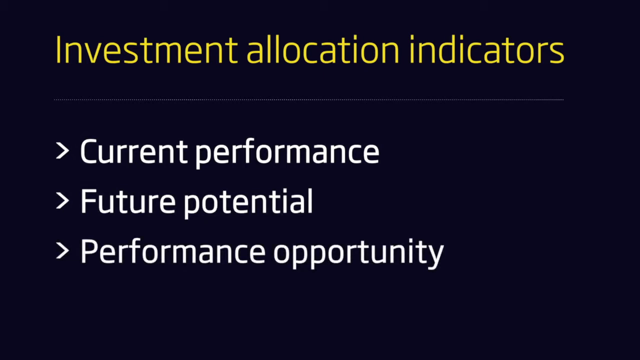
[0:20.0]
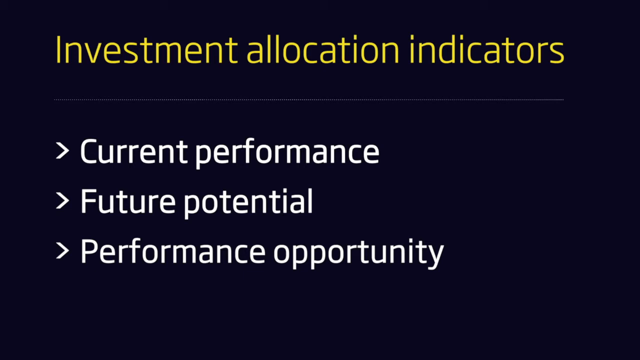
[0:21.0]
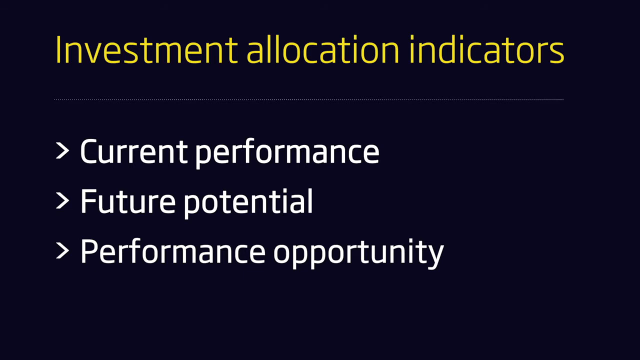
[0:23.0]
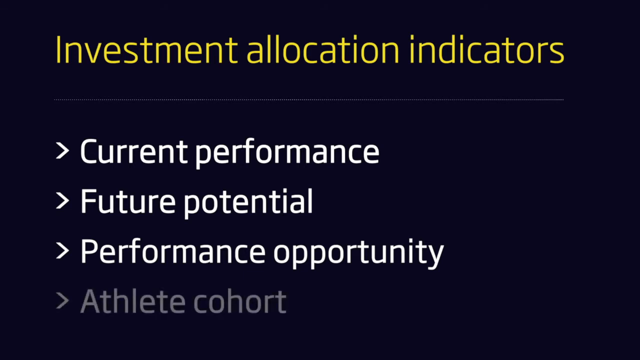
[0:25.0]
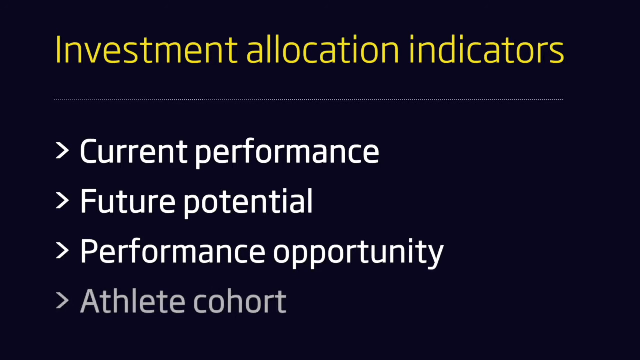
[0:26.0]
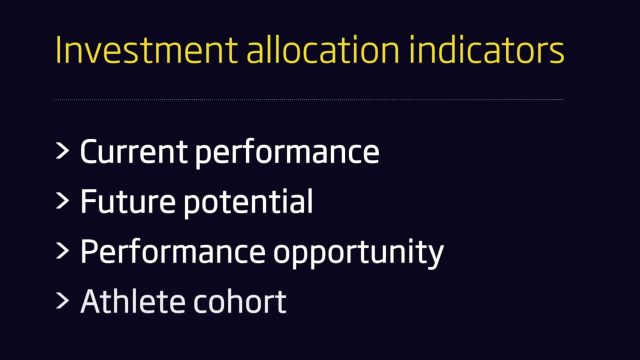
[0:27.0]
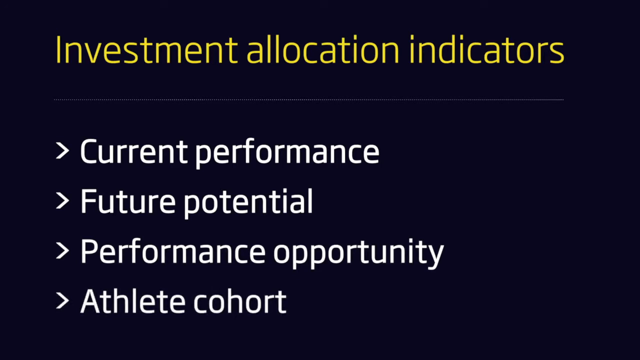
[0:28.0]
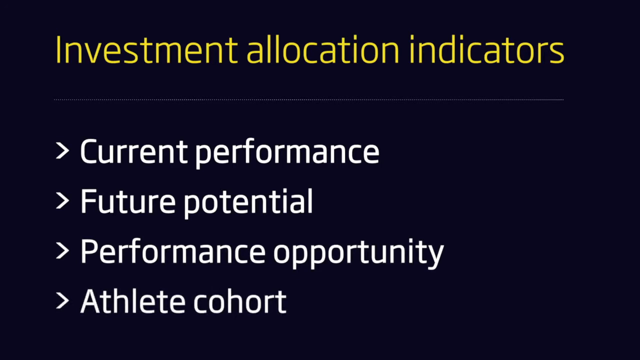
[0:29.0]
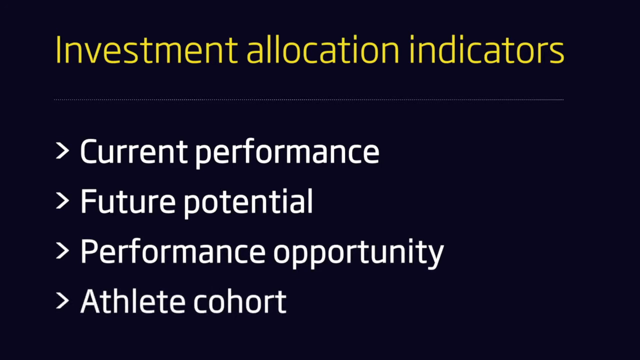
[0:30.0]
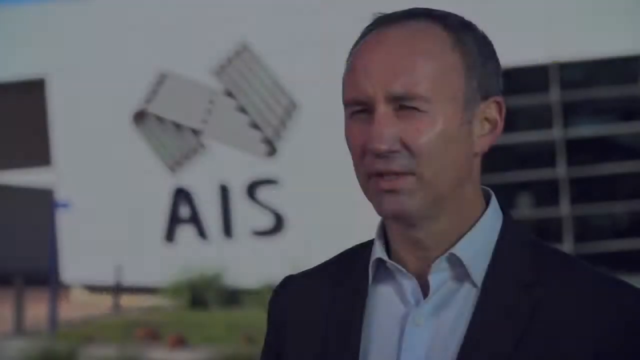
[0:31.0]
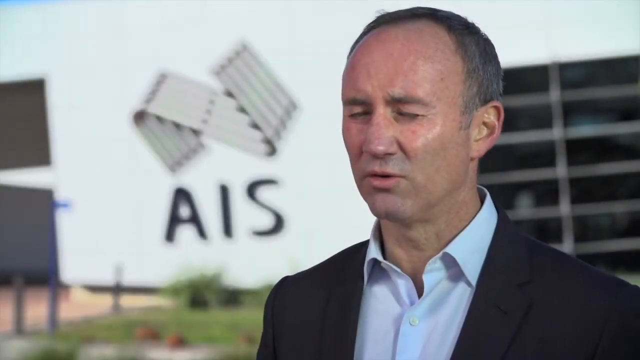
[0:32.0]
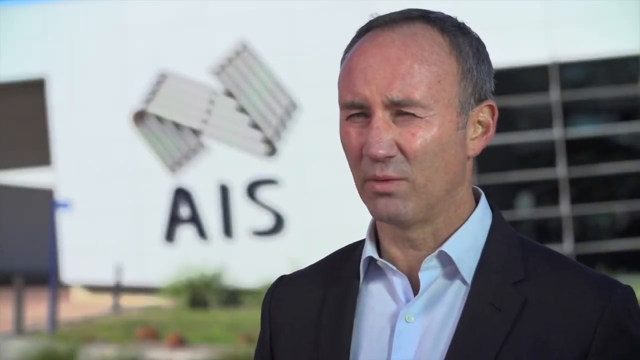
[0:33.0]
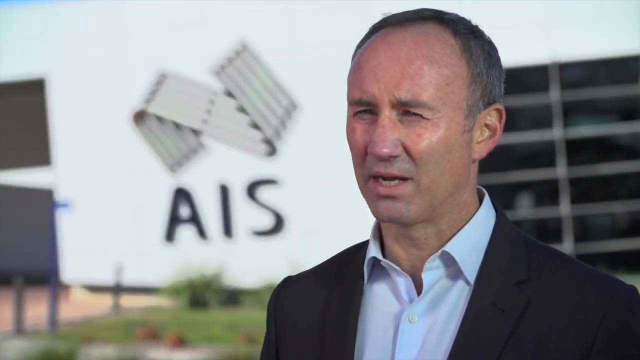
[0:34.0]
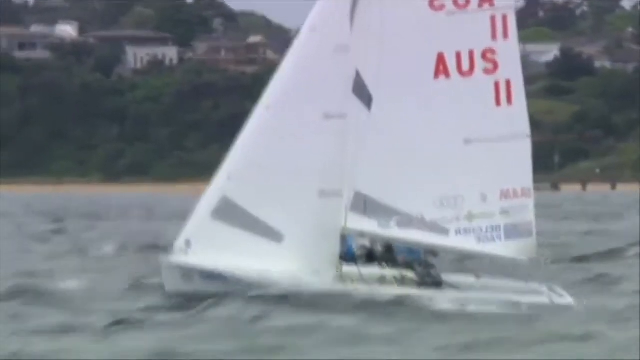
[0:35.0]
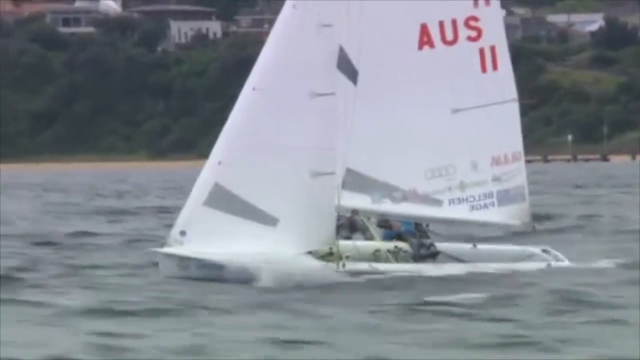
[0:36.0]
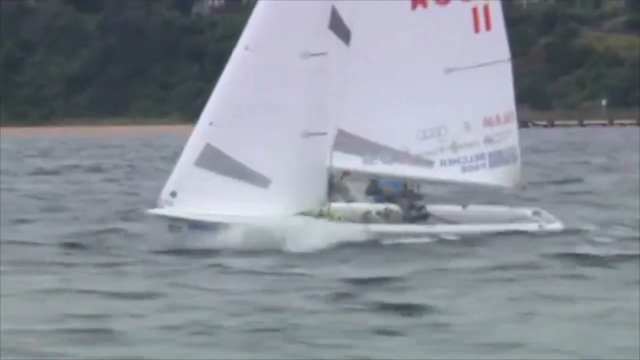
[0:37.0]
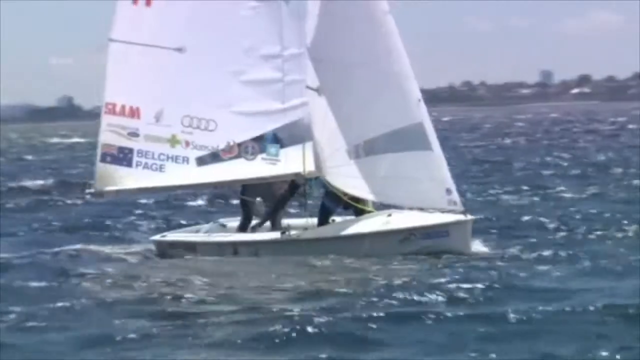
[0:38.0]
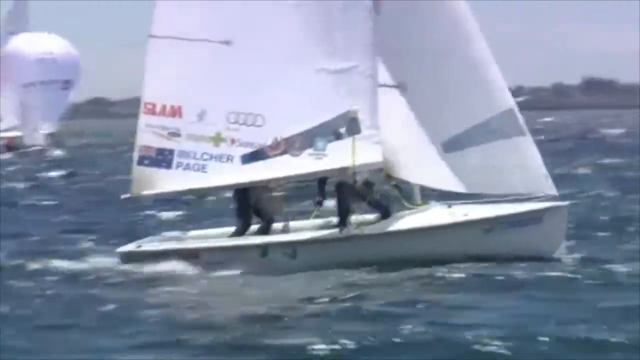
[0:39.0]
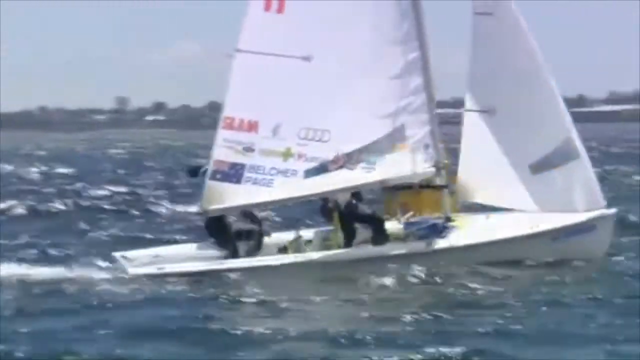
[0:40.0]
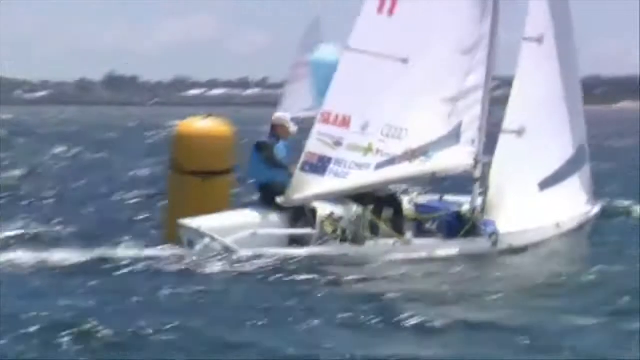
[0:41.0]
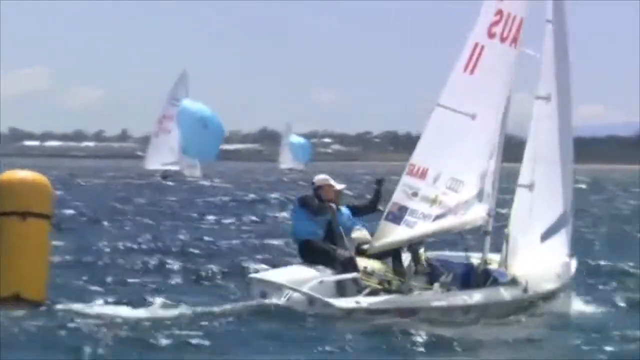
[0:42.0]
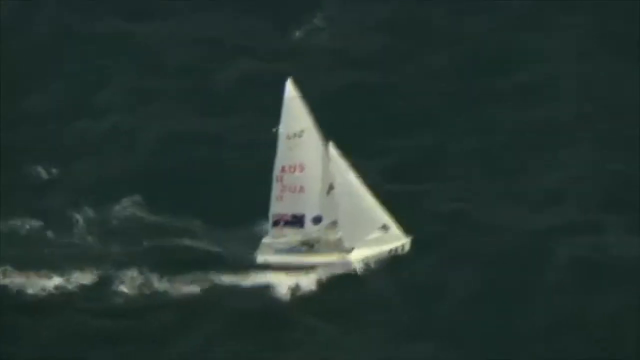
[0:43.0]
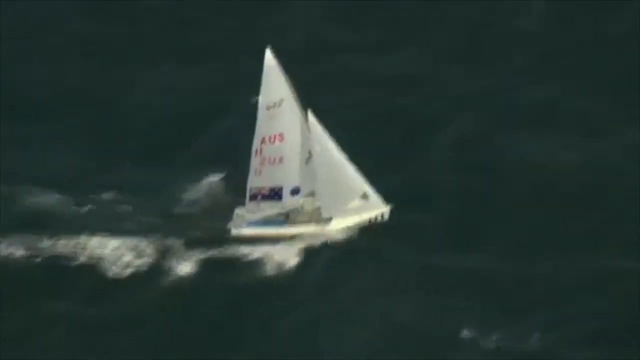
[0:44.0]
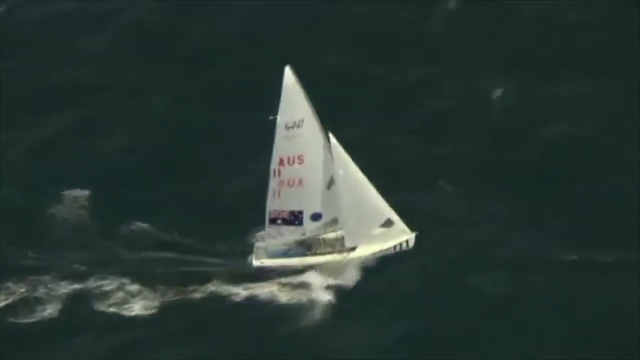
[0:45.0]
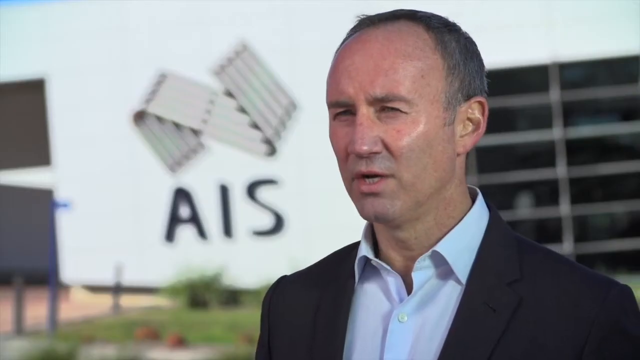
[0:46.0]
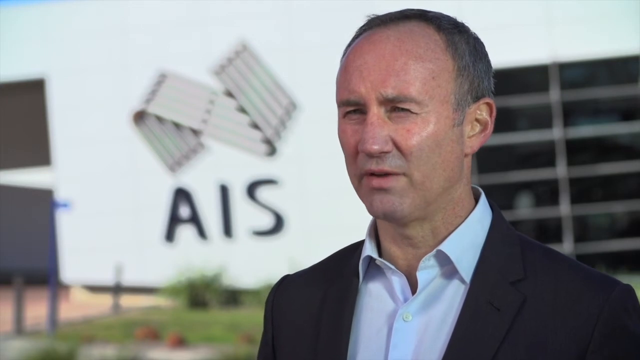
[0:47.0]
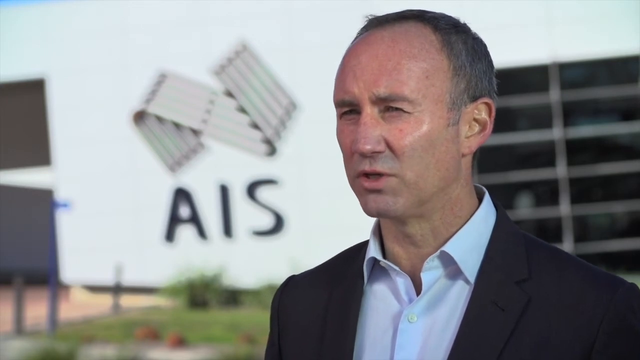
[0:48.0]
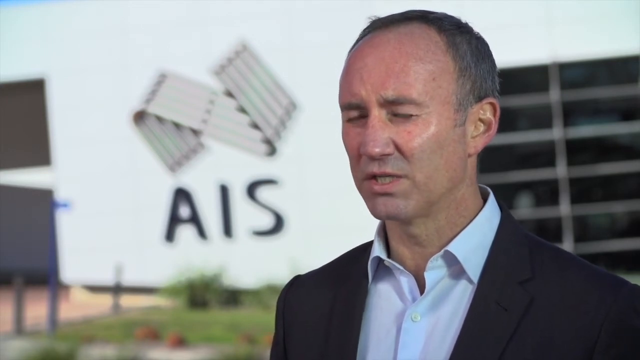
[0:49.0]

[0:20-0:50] The gentleman, the director, is speaking. Text then reads "investment allocation indicators overall," and underneath it is a section with "current performance," "future potential," and "performance opportunity." The scene shifts to small sailboats racing in Australia; one of the sailboats has a sail with "AUS" on it.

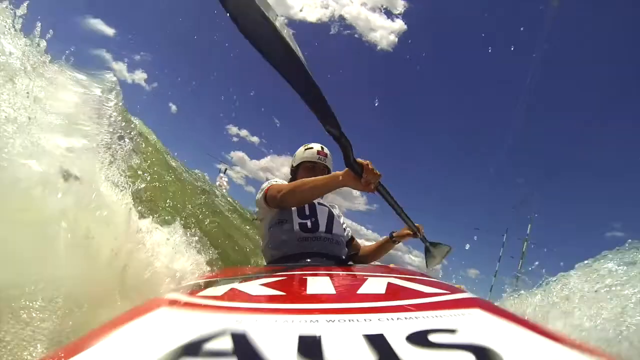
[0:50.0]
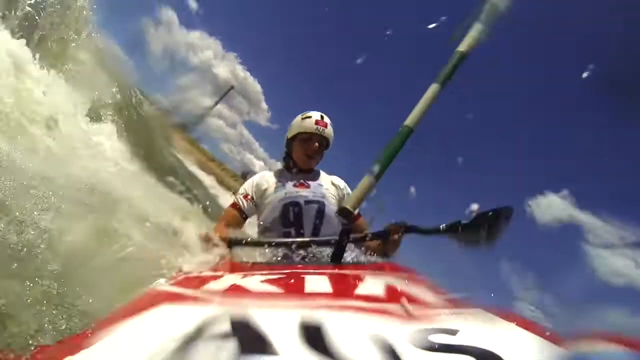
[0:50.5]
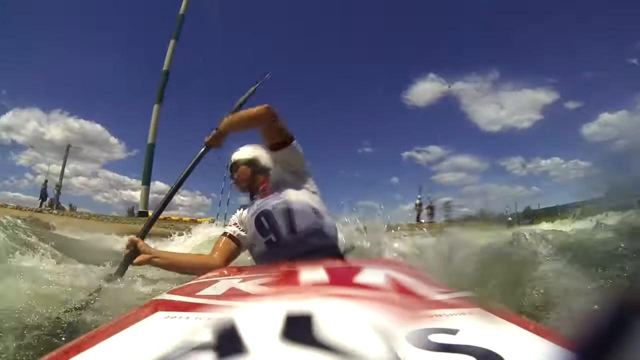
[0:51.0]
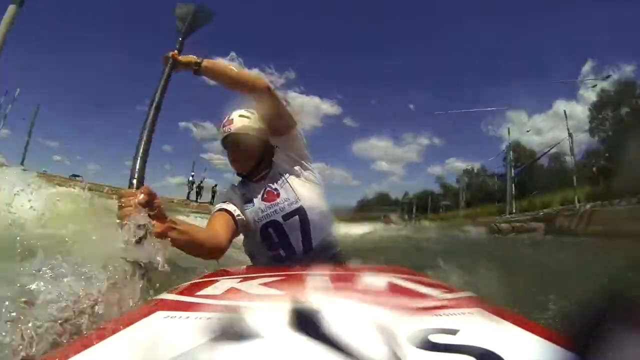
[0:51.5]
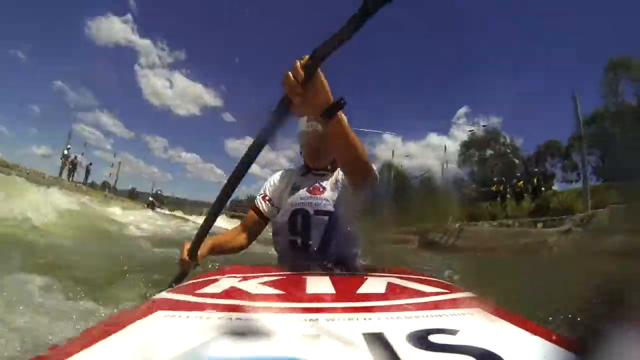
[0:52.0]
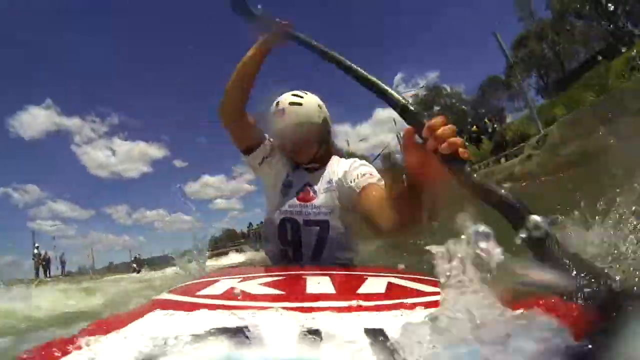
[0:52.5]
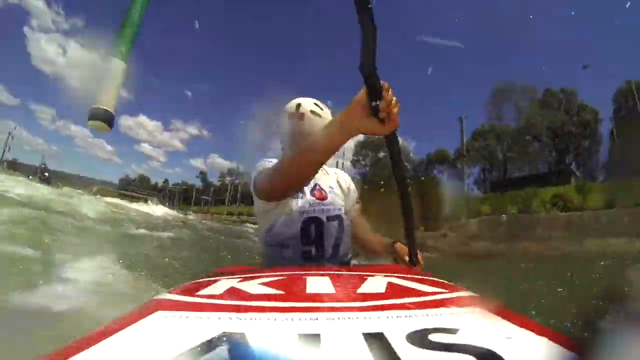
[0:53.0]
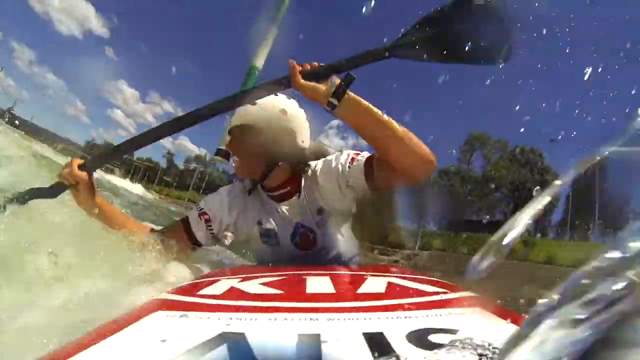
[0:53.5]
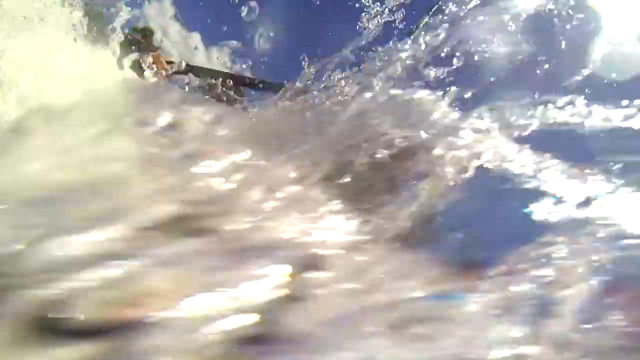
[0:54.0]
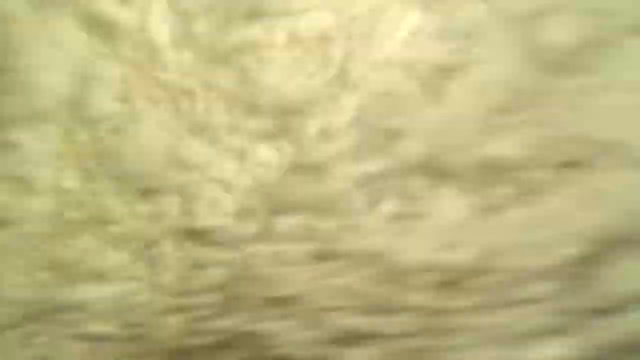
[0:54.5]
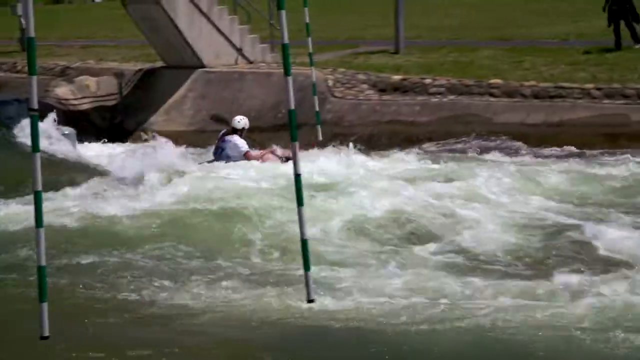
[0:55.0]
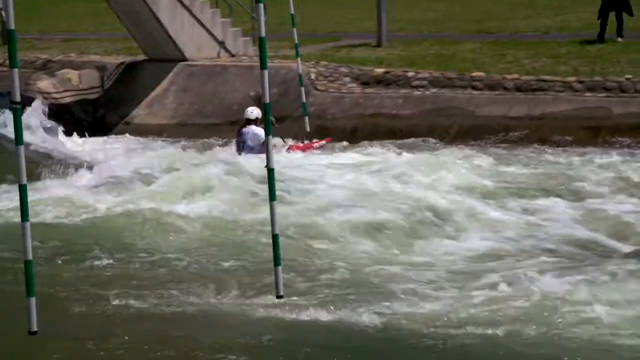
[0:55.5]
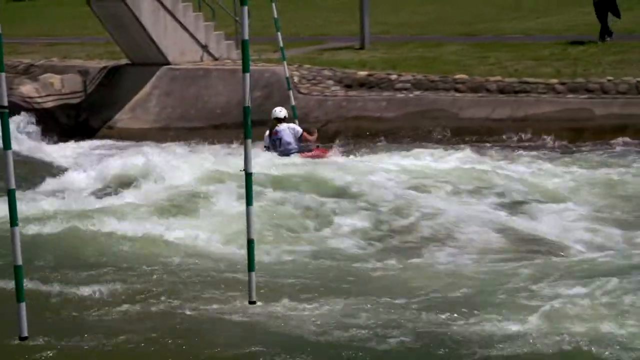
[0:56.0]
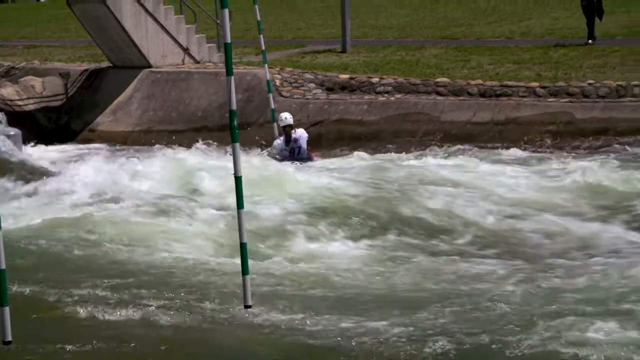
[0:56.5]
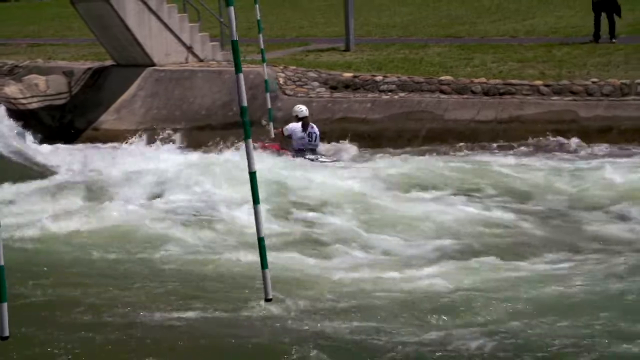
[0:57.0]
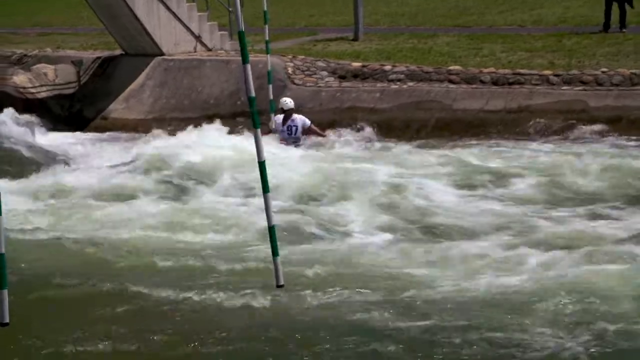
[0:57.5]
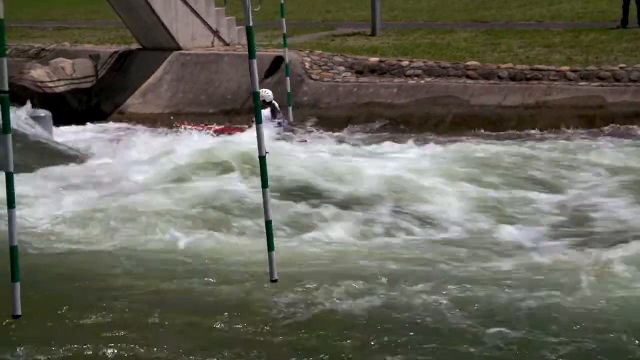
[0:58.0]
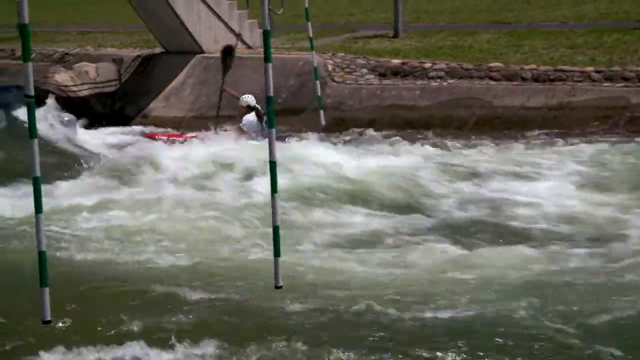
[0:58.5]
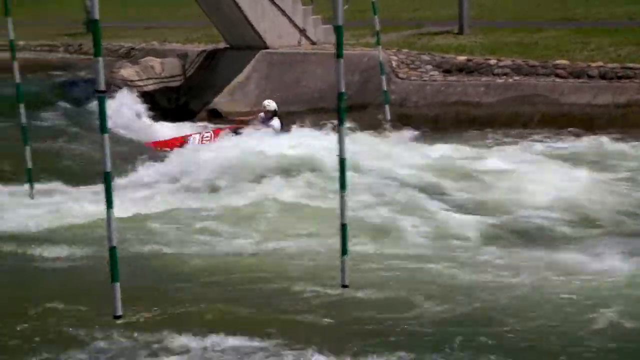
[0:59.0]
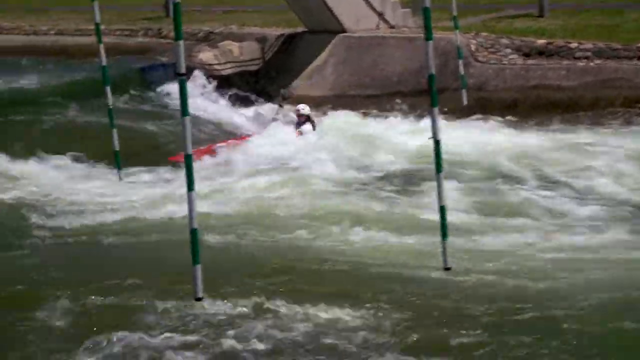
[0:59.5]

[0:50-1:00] A man wearing a helmet and a shirt with the number 97 on it, apparently in some form of competition, is in a kayak of some sort with a paddle in very rough water. He fights hard against the currents, which seem to be getting the best of him. The water appears to be in some kind of canal, not in the wilderness but maybe in a more suburban area. It is some type of sports competition.